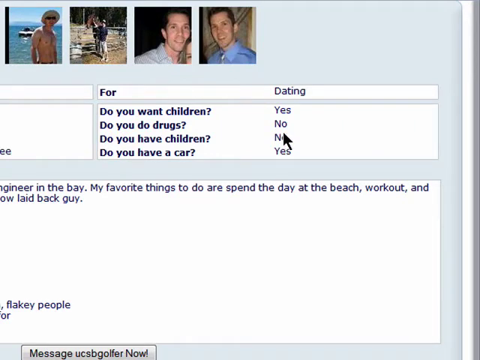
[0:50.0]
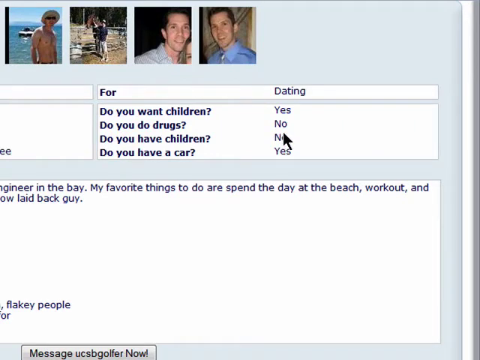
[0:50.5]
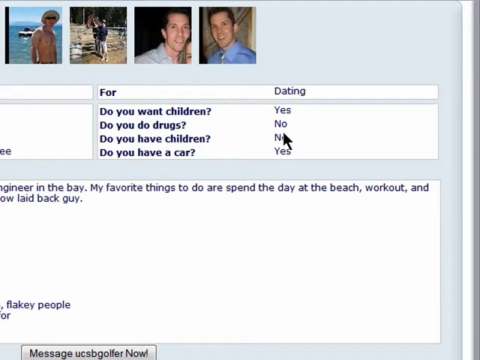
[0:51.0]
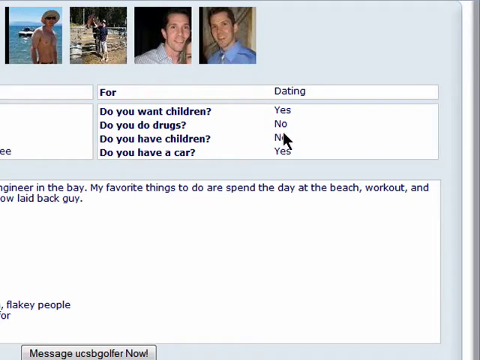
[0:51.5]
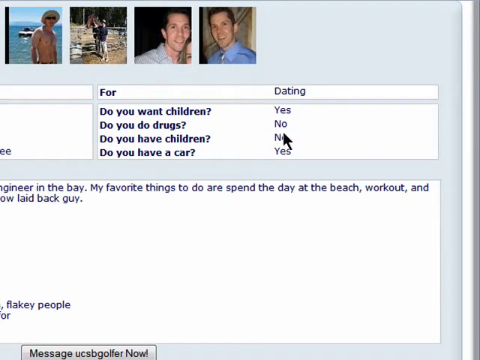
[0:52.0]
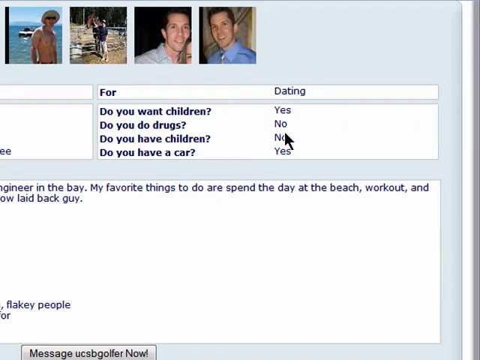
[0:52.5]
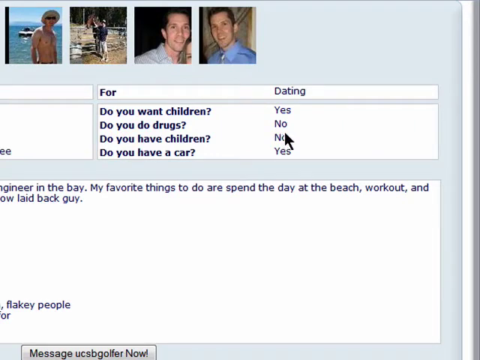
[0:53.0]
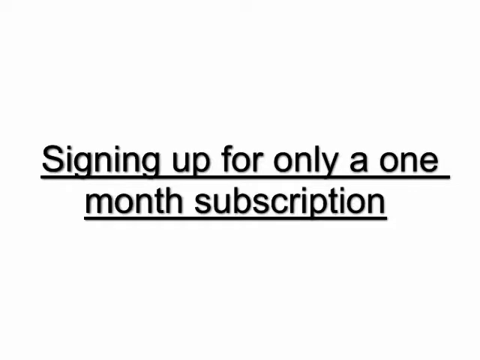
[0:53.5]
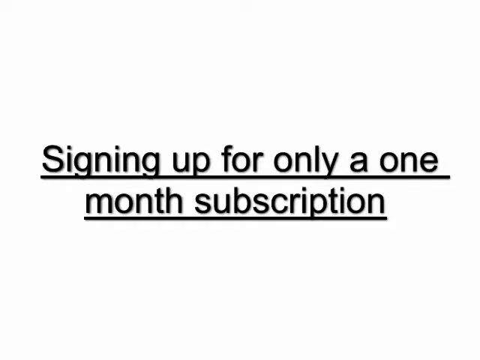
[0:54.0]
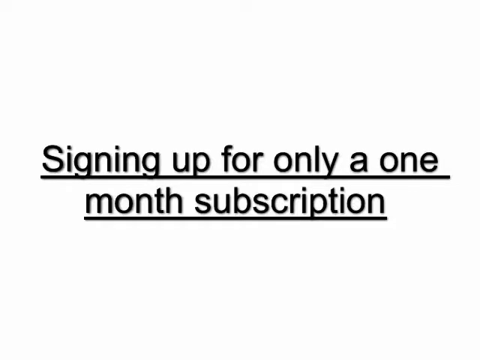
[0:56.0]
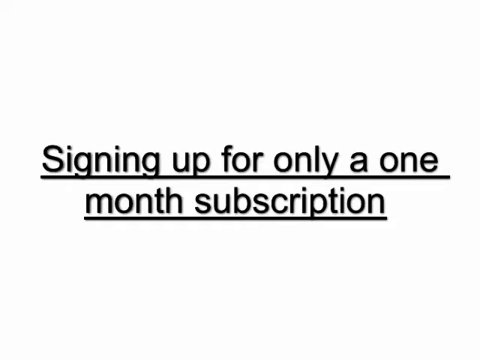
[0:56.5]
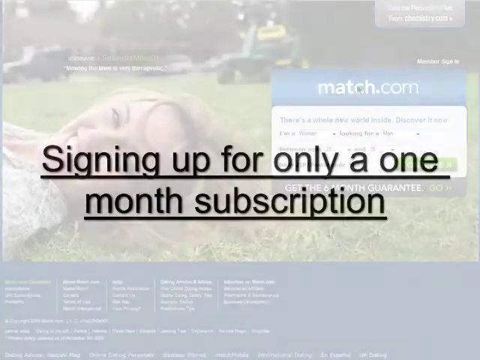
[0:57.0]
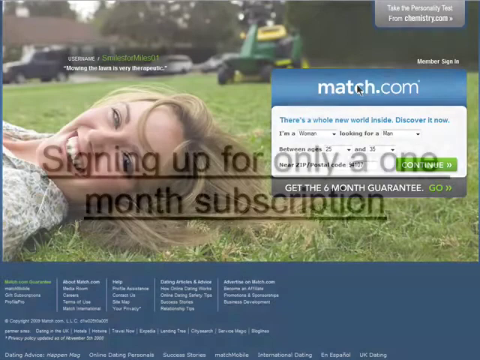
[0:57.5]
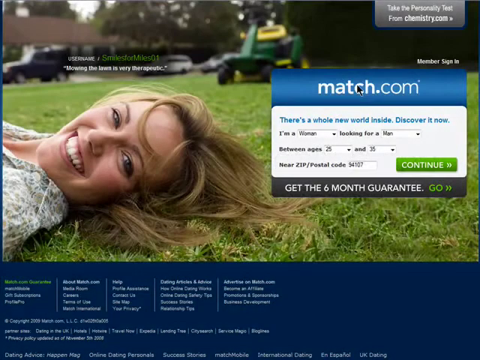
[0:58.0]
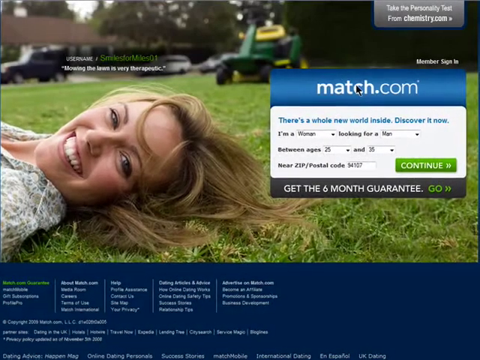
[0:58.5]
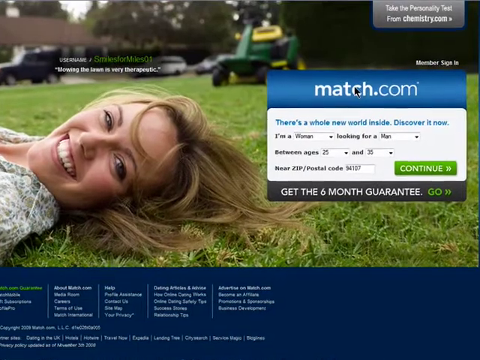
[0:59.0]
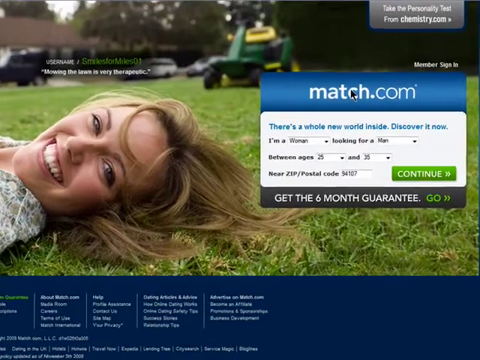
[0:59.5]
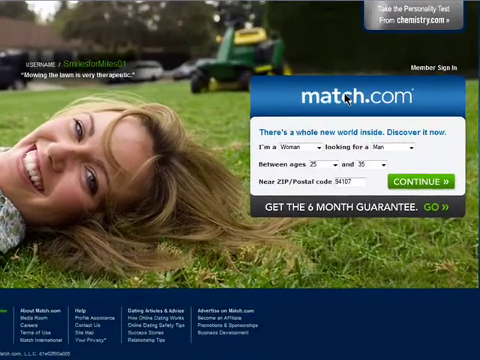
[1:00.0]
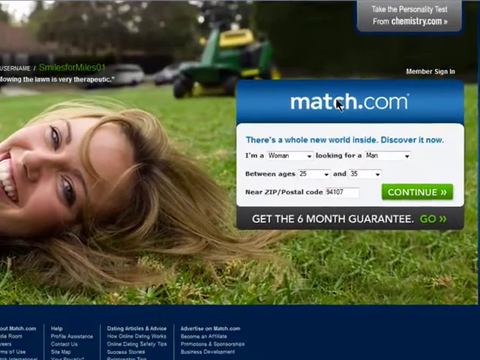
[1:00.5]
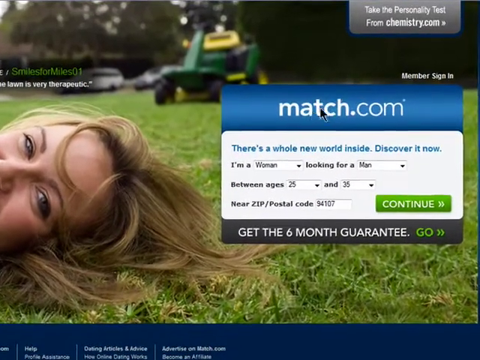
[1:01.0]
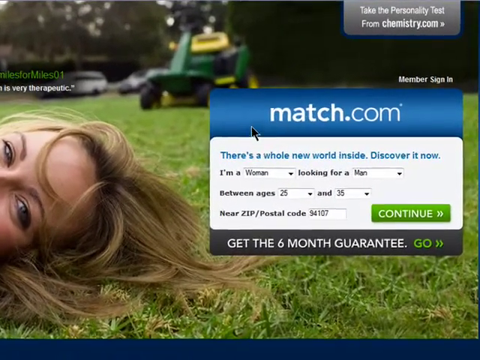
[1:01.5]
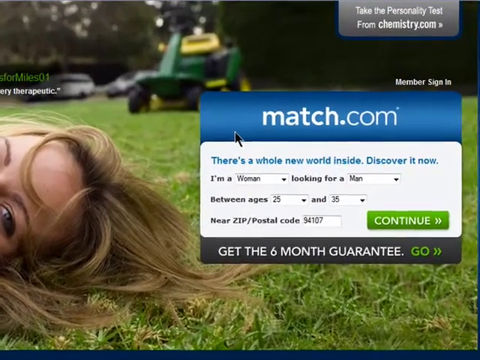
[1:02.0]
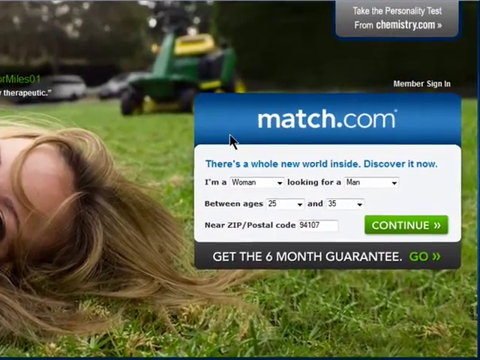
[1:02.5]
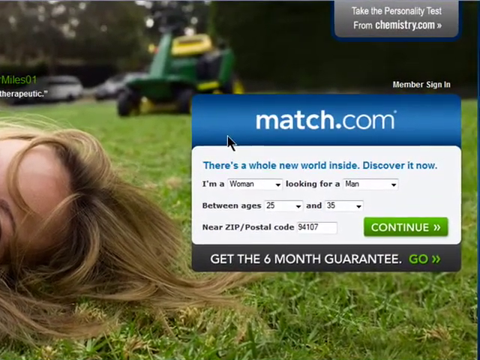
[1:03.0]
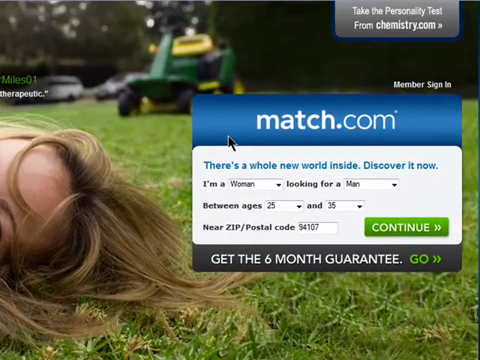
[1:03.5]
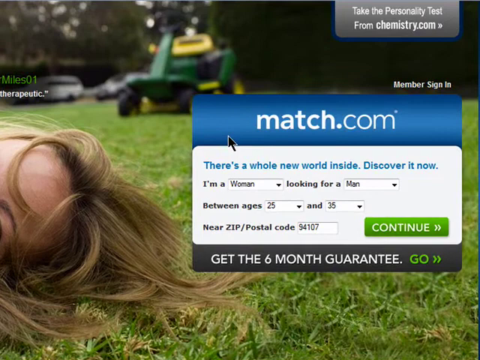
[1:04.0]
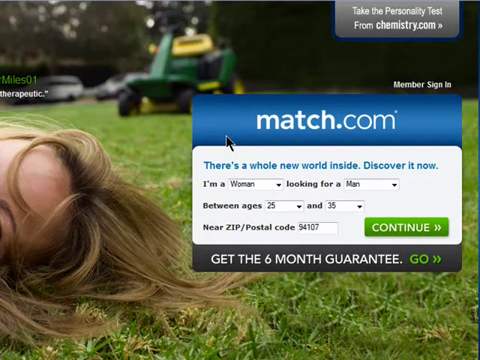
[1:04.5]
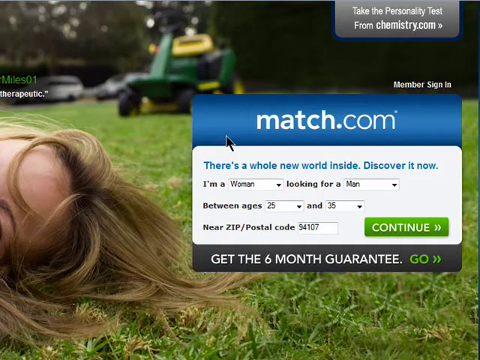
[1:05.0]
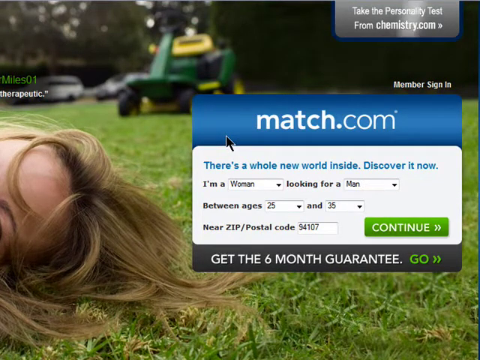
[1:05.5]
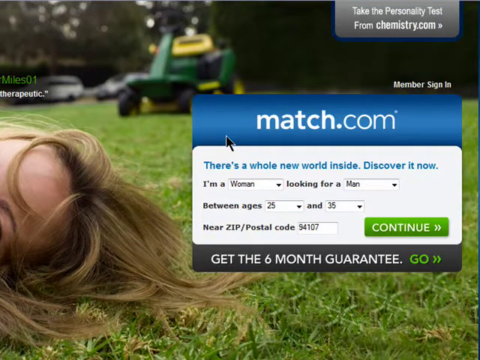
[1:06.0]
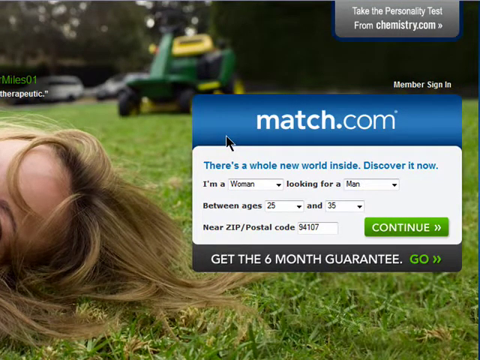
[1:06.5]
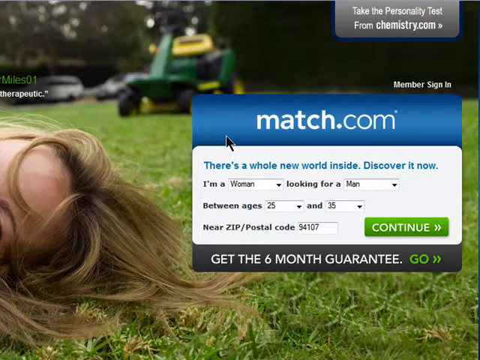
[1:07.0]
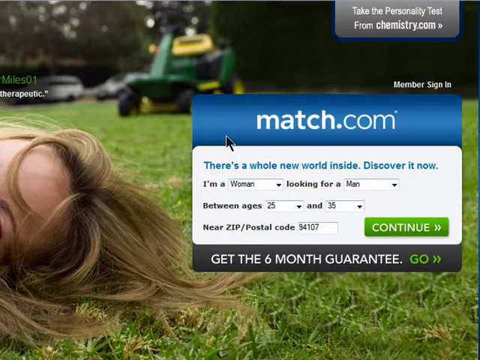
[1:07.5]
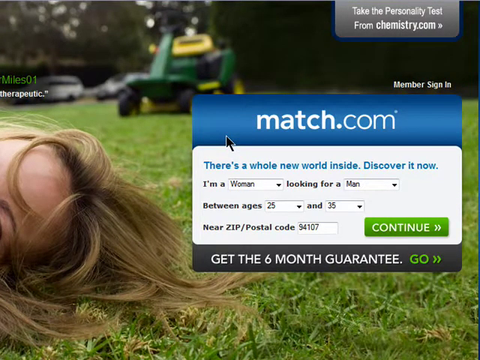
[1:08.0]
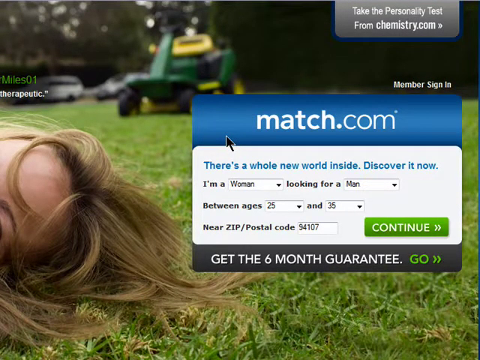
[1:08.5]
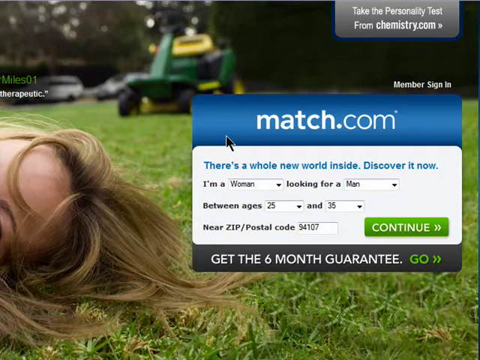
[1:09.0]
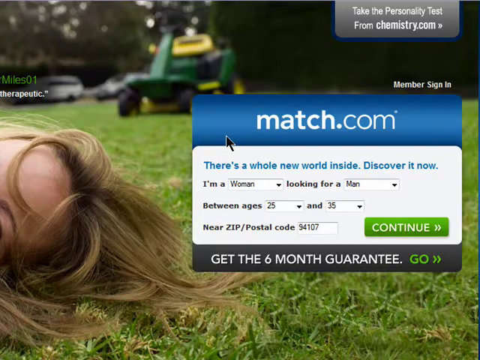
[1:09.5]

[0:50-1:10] A white screen reads, in black underlined text, "Signing up for only a one-month subscription". This fades out to a screenshot of a Match.com dating page. At the top is a large banner image of a woman laying in the grass; only her shoulders and head are visible as her body trails off toward the right-hand side, and behind her are trees and cars parked on a road. Over the right-hand side of the image is a blue pop-up box with a title in white text on a blue background reading "match.com". Underneath is a section for selecting what users are seeking: "I am" with a drop-down box for woman or man, "looking for" with another drop-down box, a line "between the ages" with drop-down boxes for the ages, and a zip code at the bottom. To the right is a green "continue" button. Below the selection box, on a blue background, it reads "get the six-month guarantee" with a link for "Go". The video zooms in on the Match.com selection box. At the top right, above the selection box, is a gray rectangle with an option to take the personality test, which has a glimmer animation.